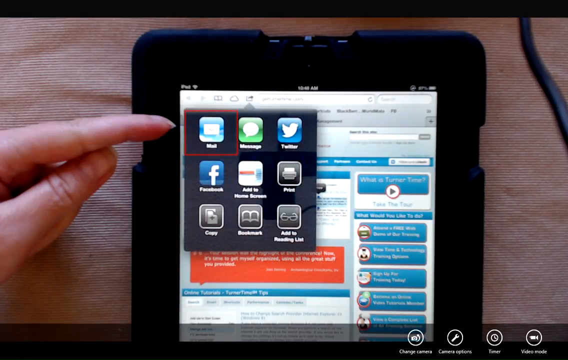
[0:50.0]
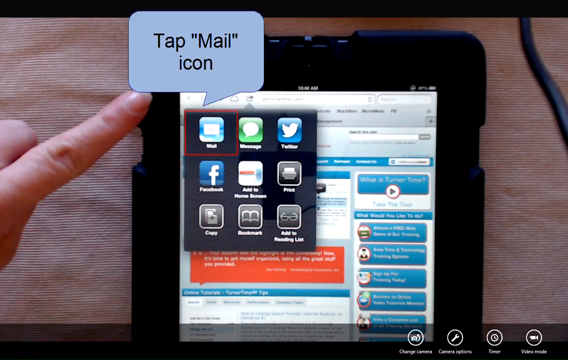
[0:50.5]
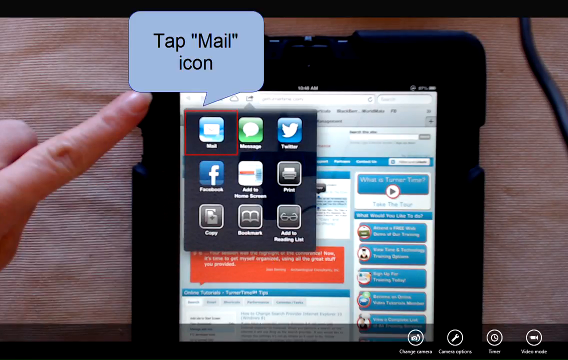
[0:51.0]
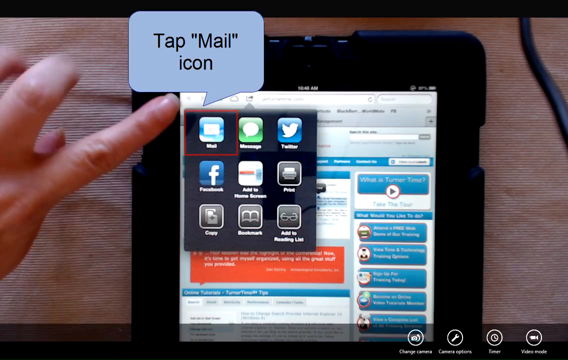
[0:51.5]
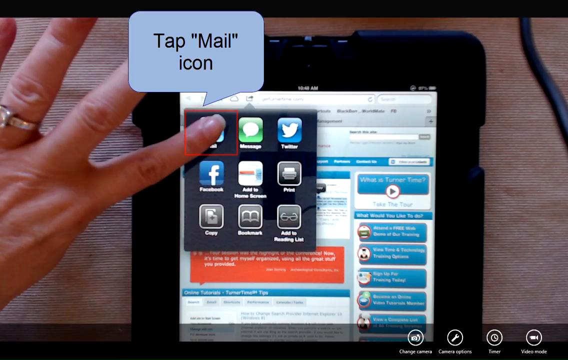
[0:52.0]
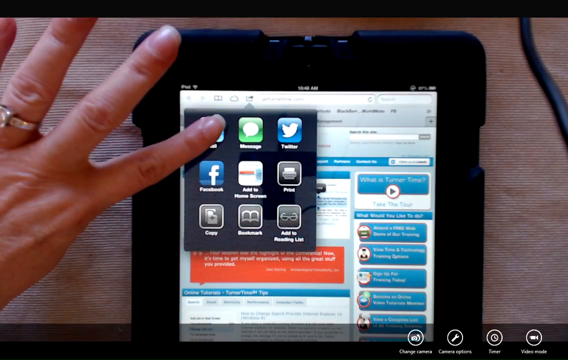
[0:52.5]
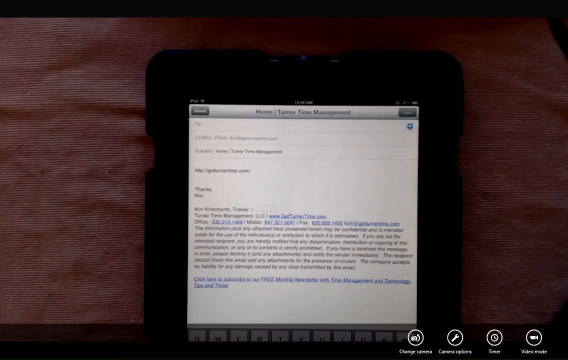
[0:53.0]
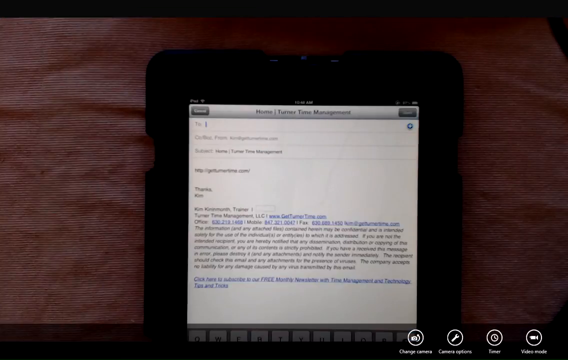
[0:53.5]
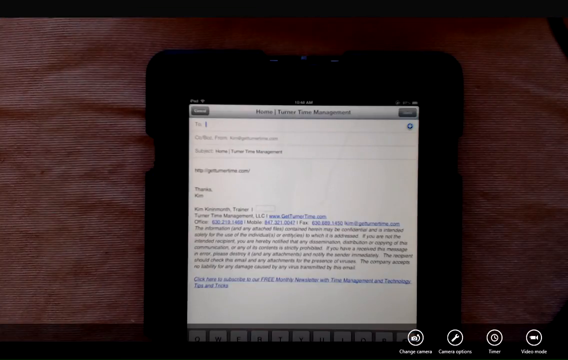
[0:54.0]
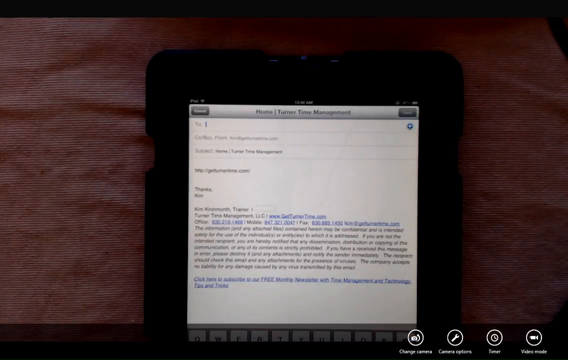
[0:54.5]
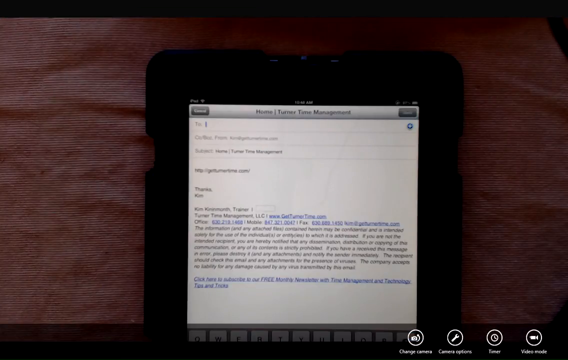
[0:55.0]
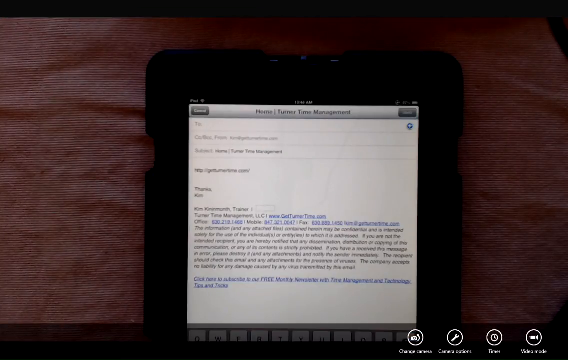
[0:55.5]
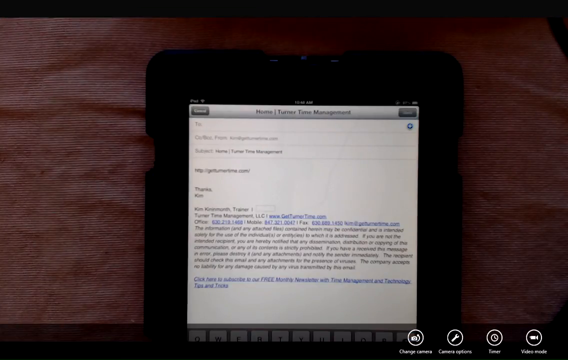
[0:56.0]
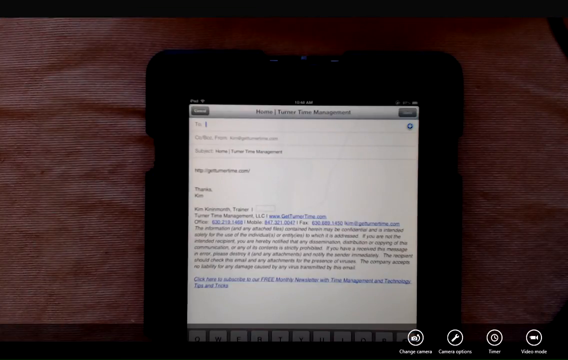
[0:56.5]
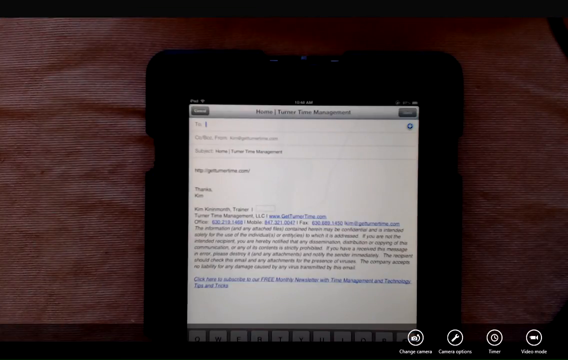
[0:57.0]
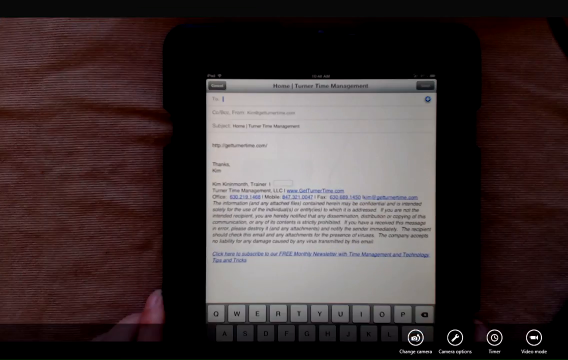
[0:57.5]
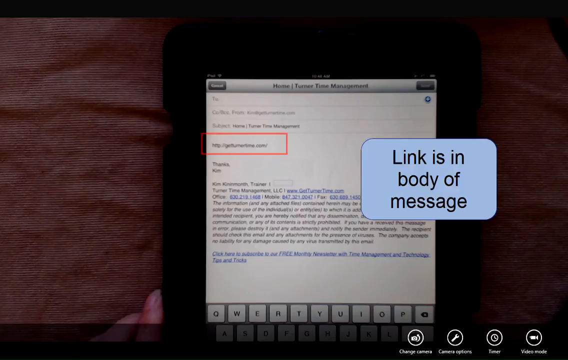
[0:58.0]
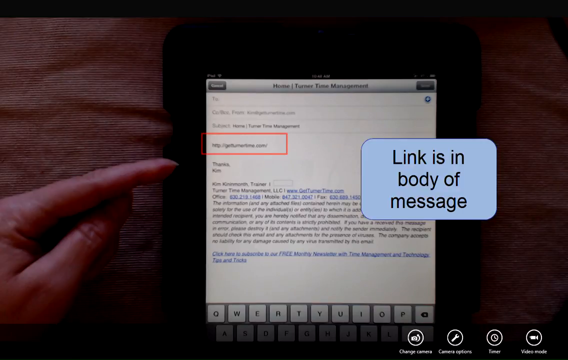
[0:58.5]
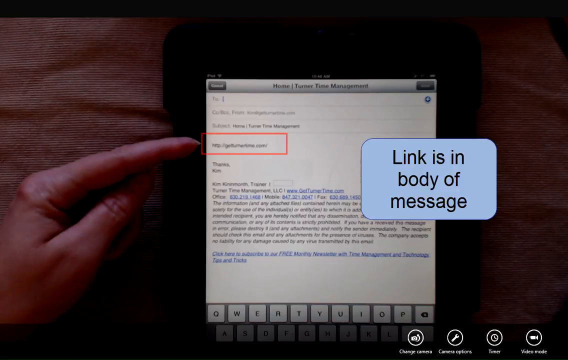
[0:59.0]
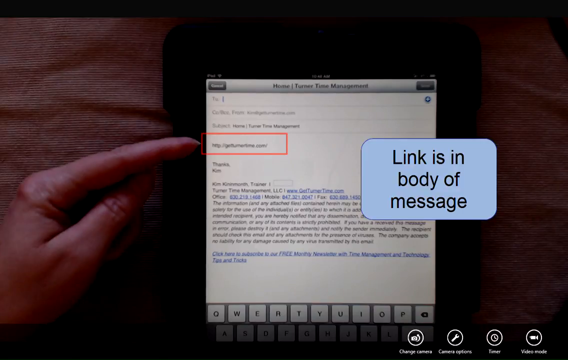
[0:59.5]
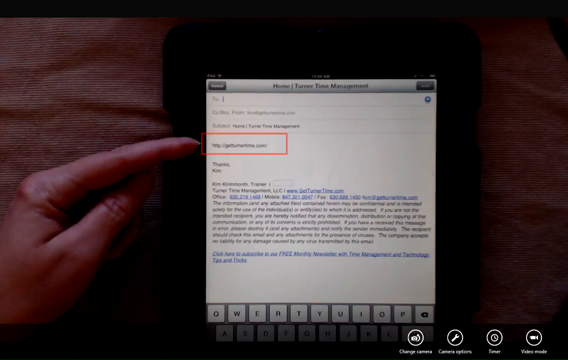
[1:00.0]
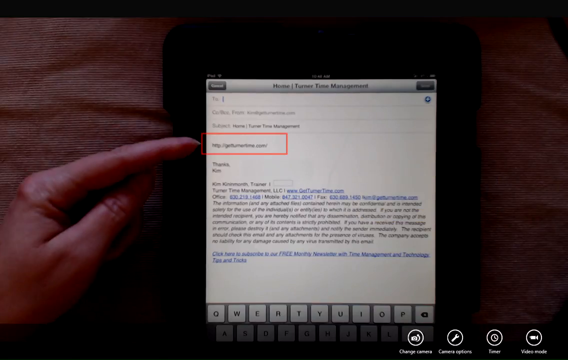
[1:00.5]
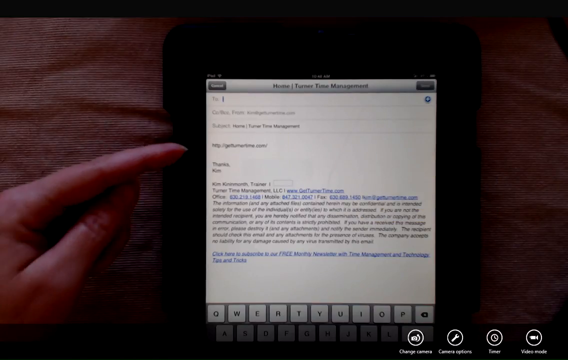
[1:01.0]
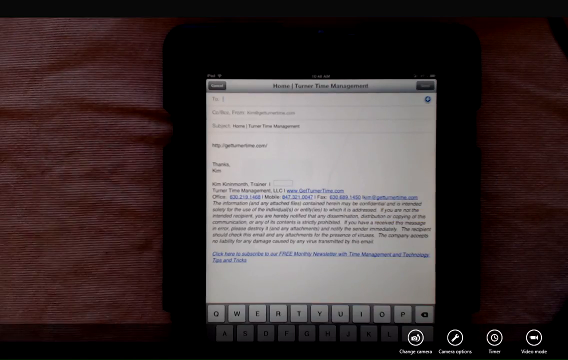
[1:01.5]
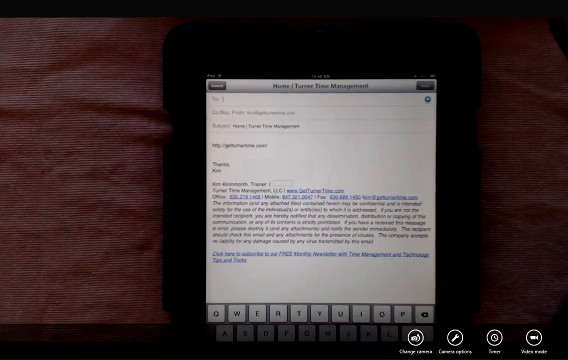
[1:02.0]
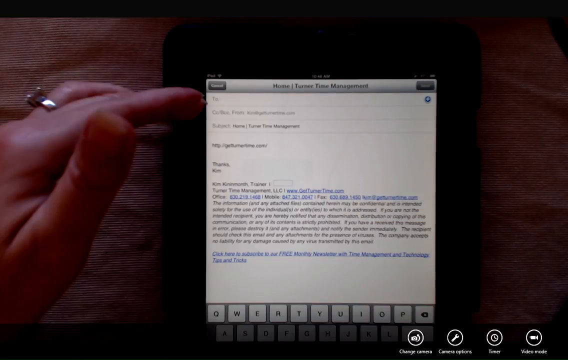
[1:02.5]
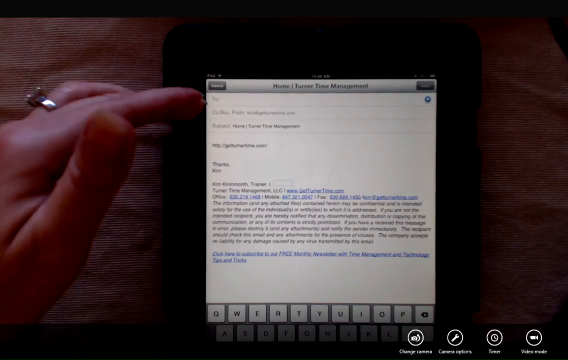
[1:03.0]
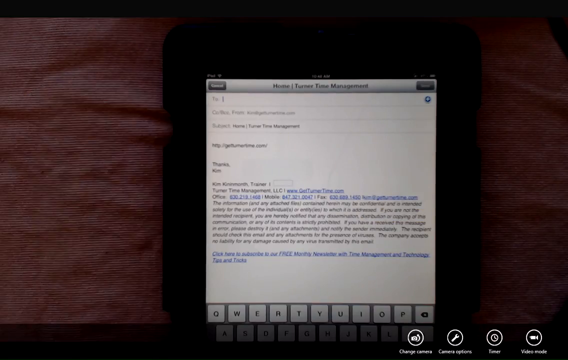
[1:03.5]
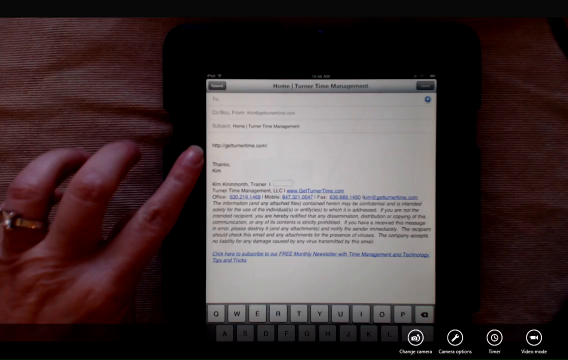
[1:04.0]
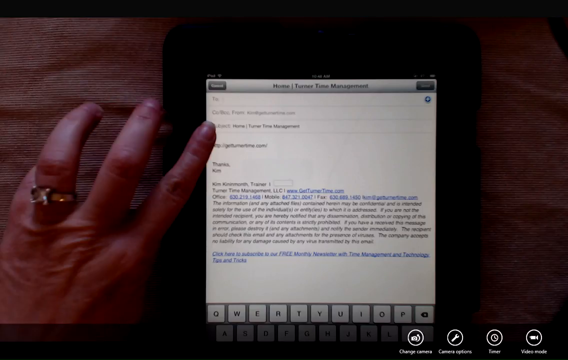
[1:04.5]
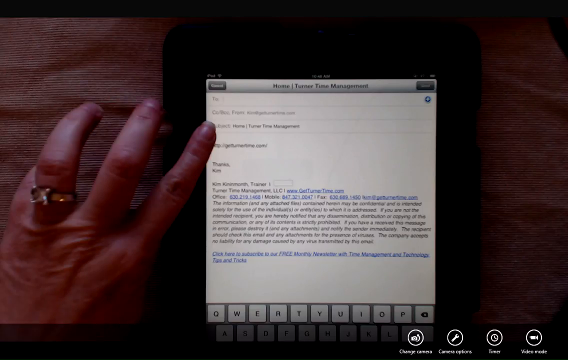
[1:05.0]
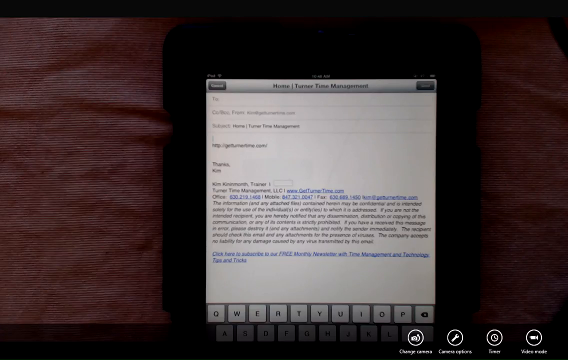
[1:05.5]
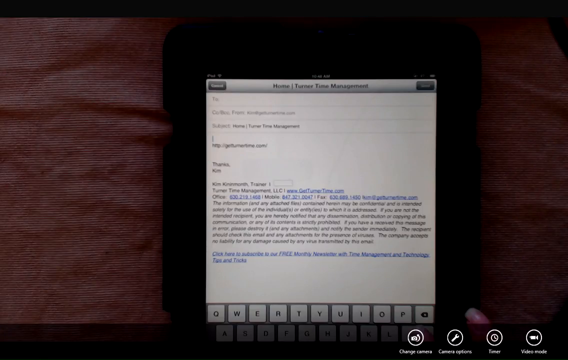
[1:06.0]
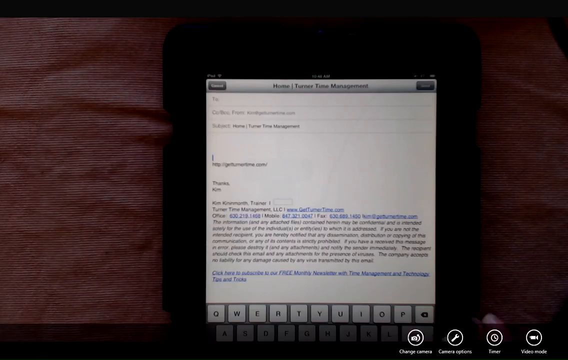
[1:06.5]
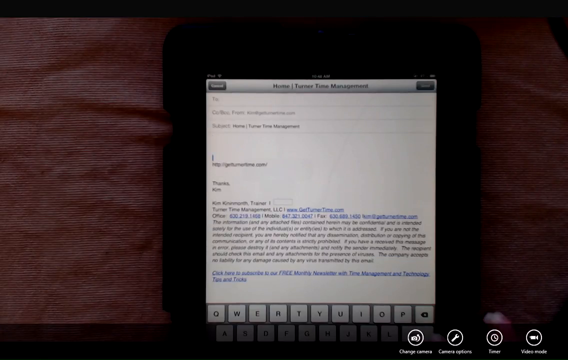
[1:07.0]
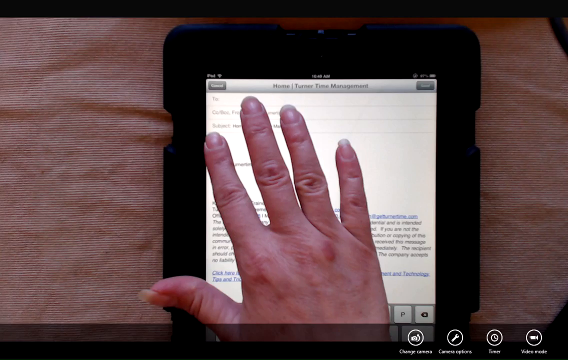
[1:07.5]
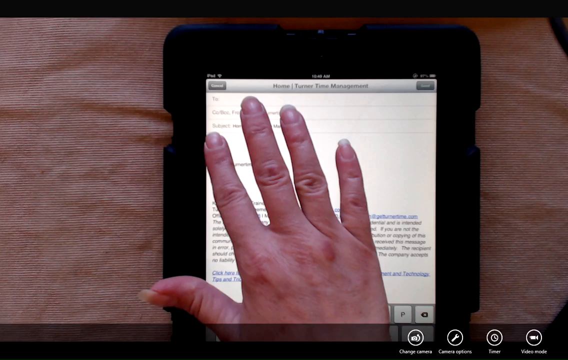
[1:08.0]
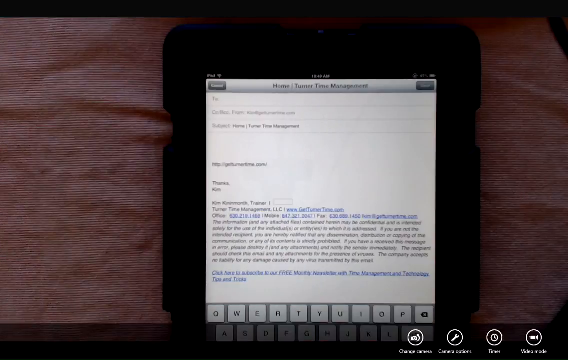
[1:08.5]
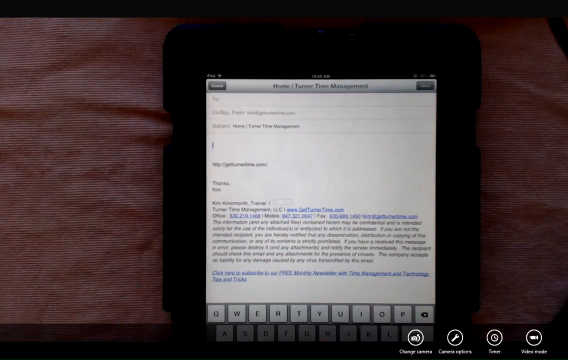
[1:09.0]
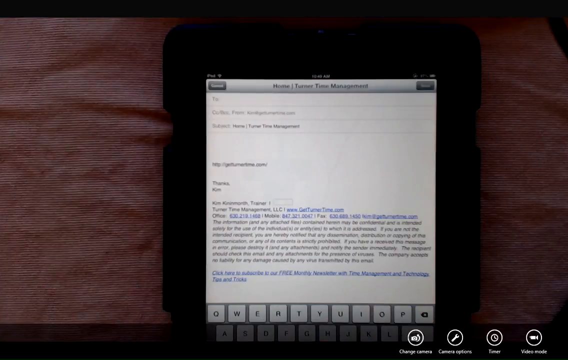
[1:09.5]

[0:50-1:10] A hand is visible on the left side of the screen, right next to the left side of the tablet, with the index finger resting right above the edge of the device's case and the thumb resting underneath the index finger. On the device's screen, what appears to be a share section has been brought up, showing nine different icons. A "tap mail icon" chat bubble pops up right above the mail icon, which is highlighted in a red box. The hand flips over with the palm facing down, now showing four fingers instead of only the index finger and thumb. The index finger hovers over the mail icon and presses it, and the mail app opens with text inside it; a section of text is highlighted in a red box, and a pop-up on the screen says "link is in body of message."